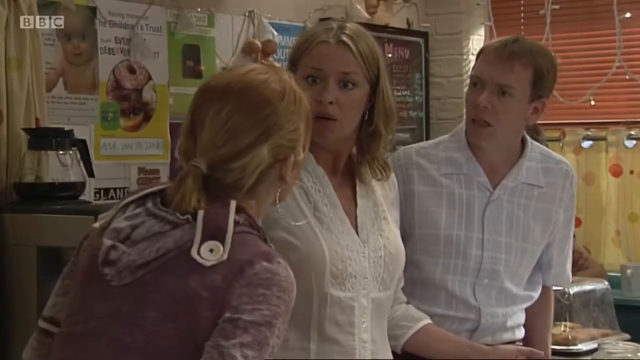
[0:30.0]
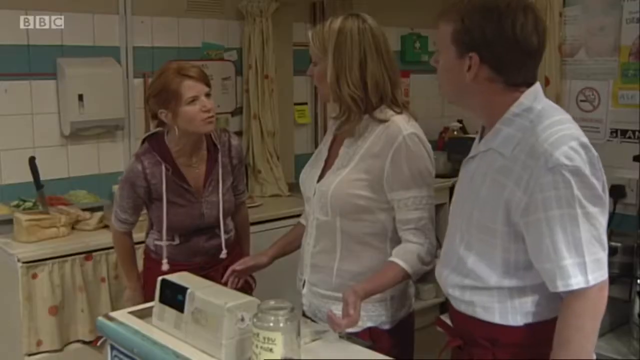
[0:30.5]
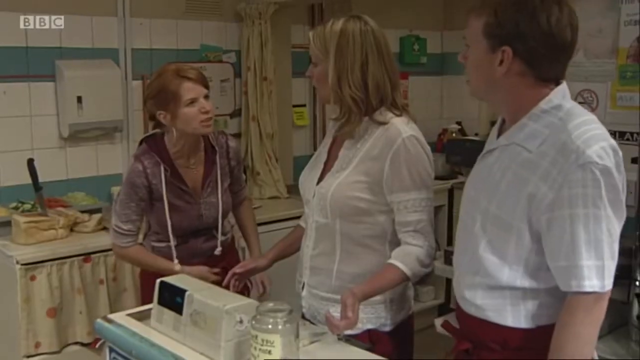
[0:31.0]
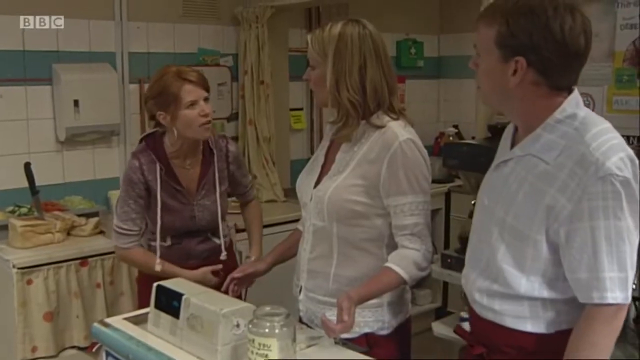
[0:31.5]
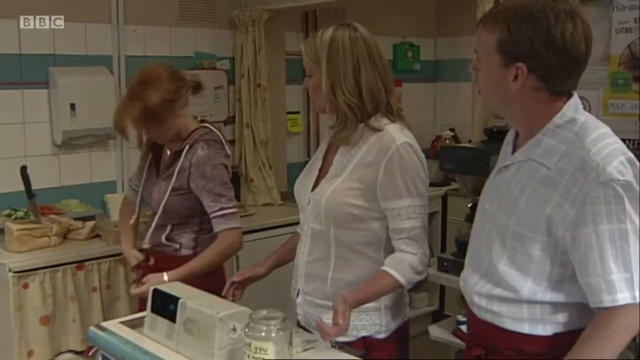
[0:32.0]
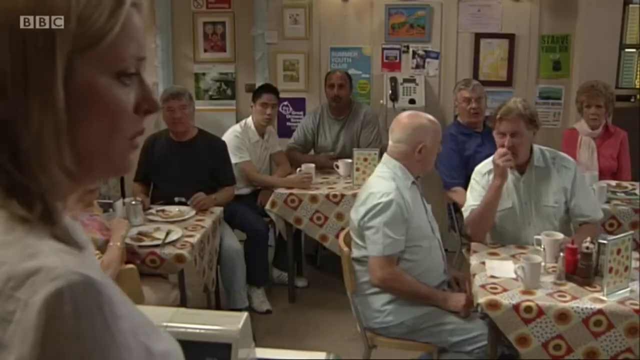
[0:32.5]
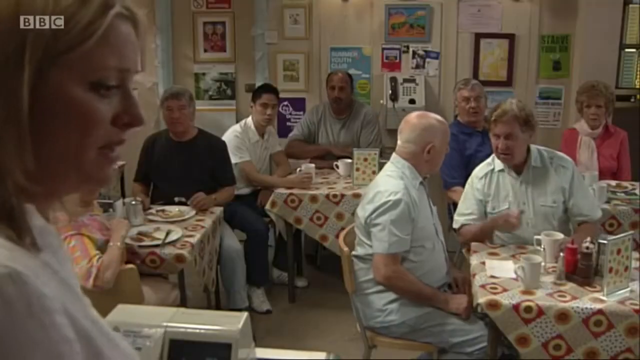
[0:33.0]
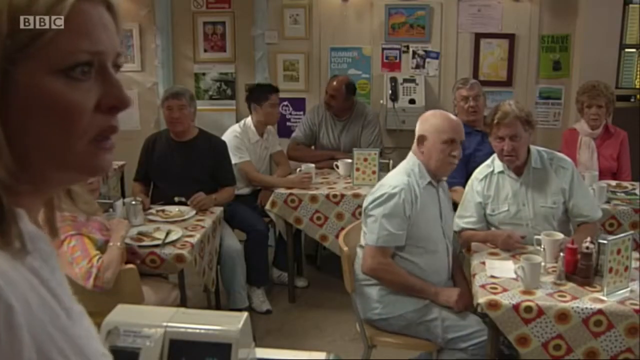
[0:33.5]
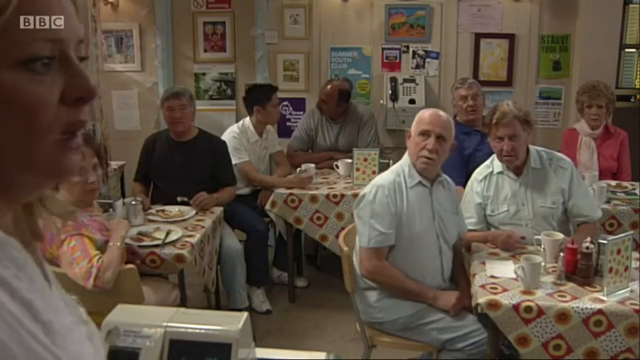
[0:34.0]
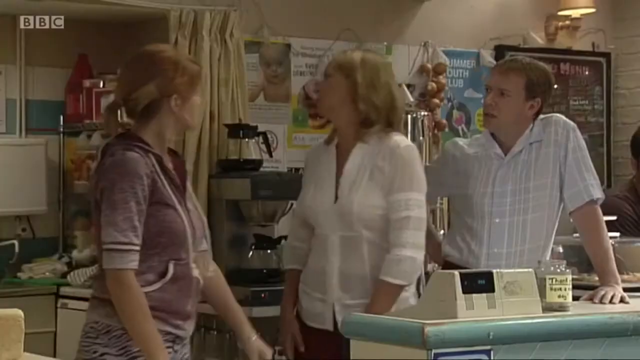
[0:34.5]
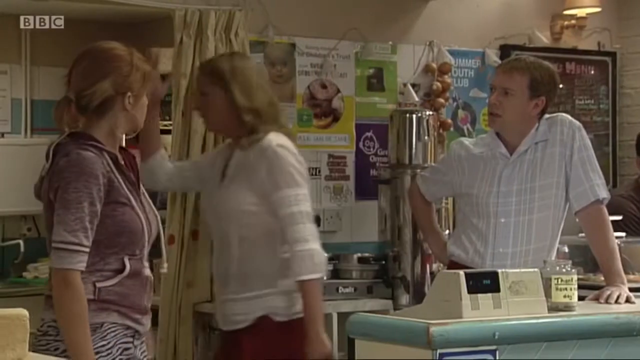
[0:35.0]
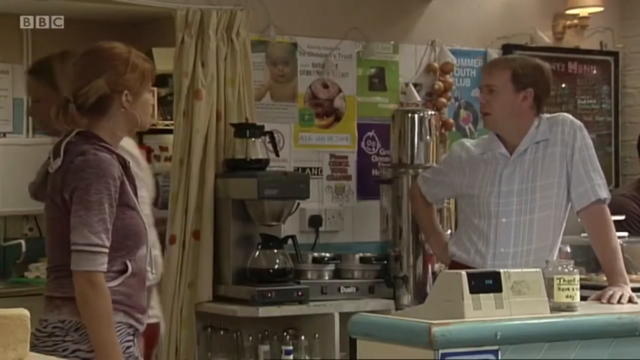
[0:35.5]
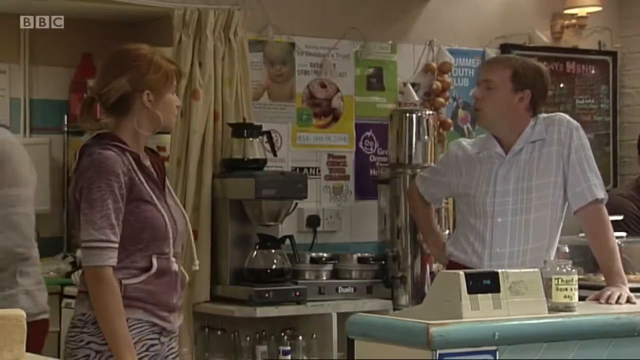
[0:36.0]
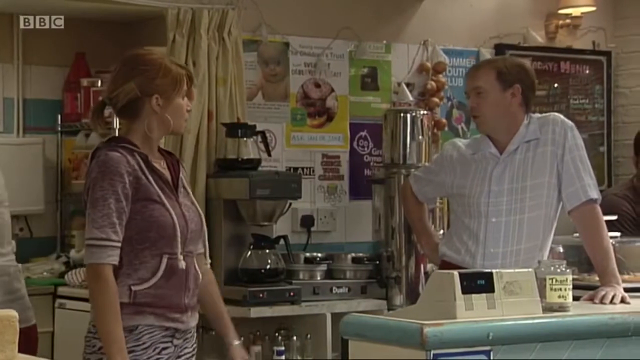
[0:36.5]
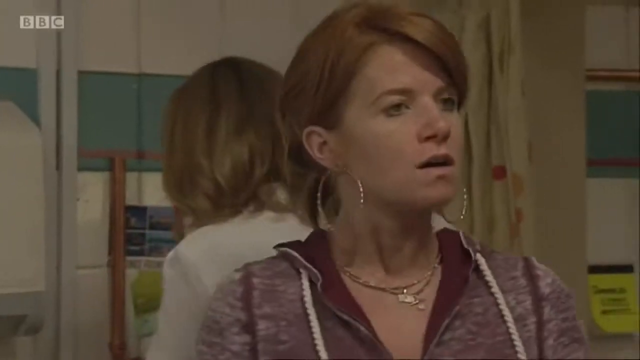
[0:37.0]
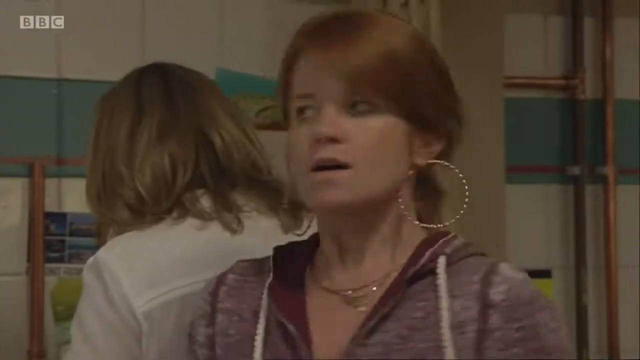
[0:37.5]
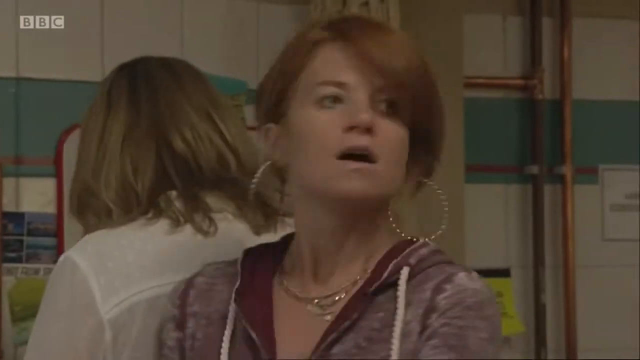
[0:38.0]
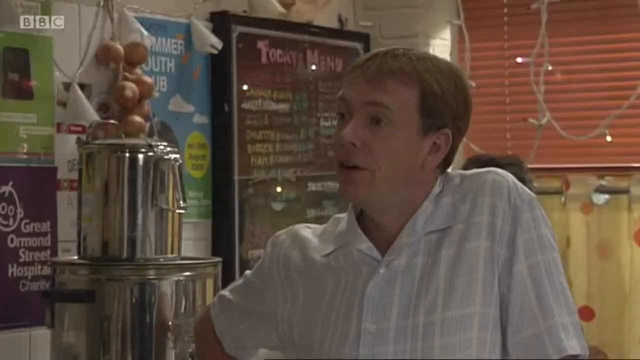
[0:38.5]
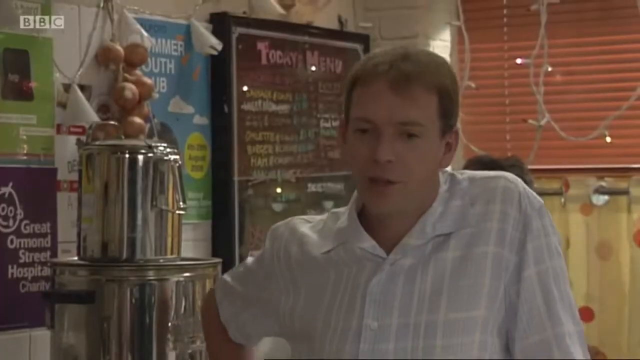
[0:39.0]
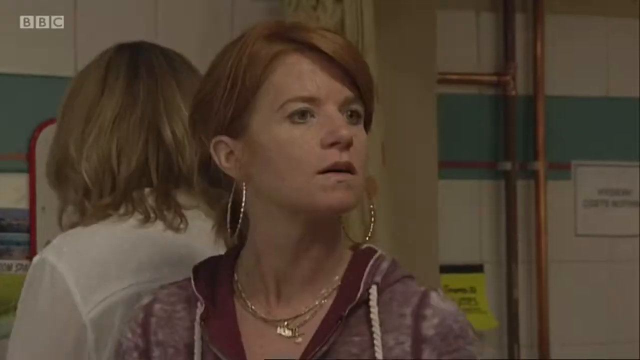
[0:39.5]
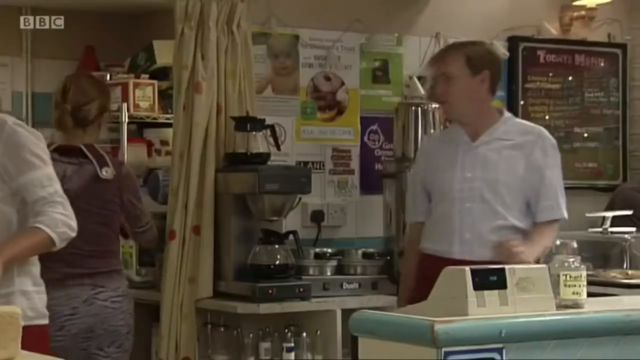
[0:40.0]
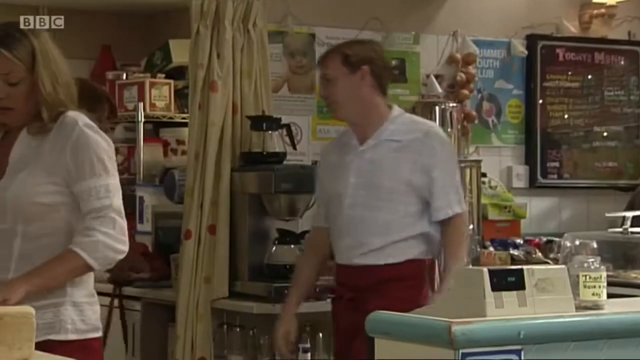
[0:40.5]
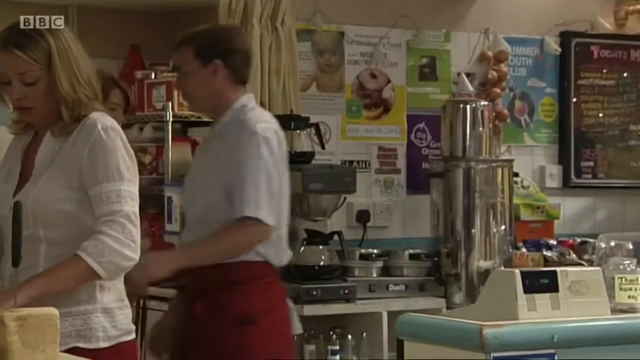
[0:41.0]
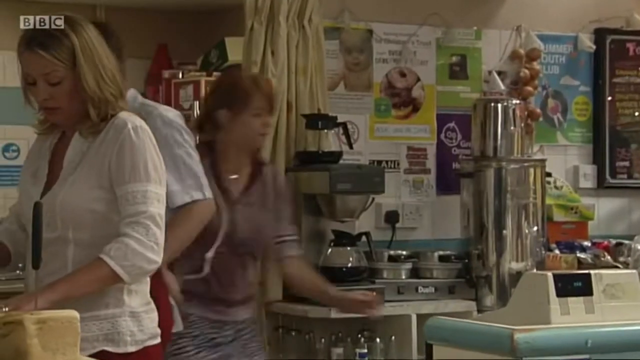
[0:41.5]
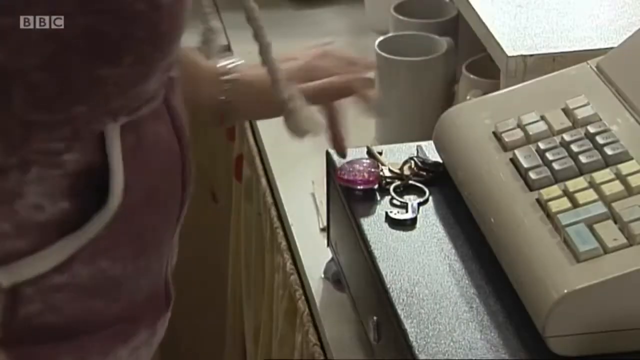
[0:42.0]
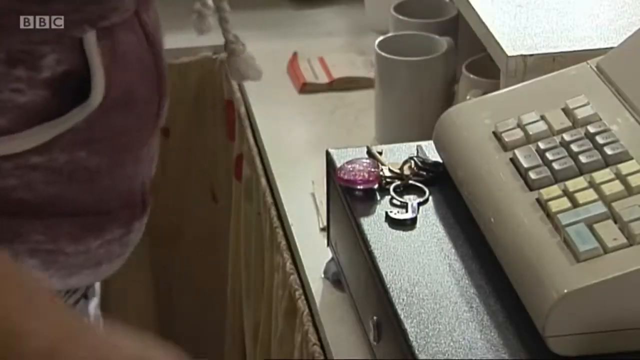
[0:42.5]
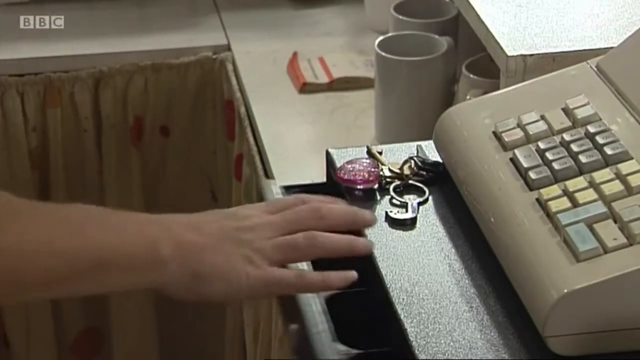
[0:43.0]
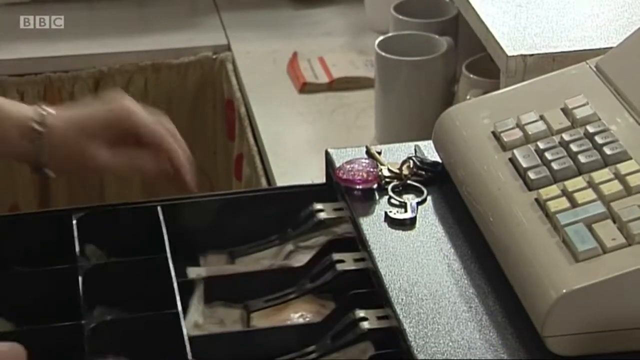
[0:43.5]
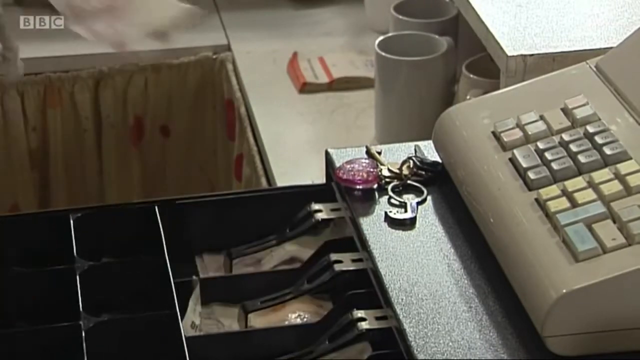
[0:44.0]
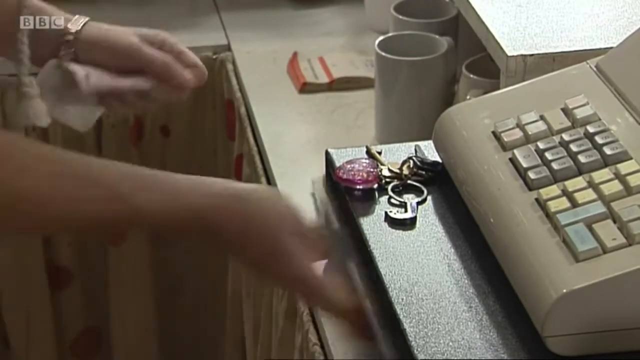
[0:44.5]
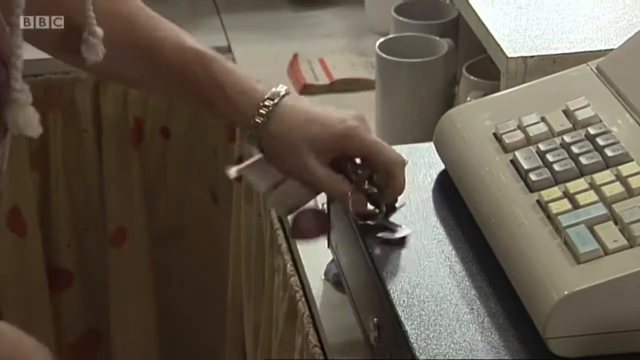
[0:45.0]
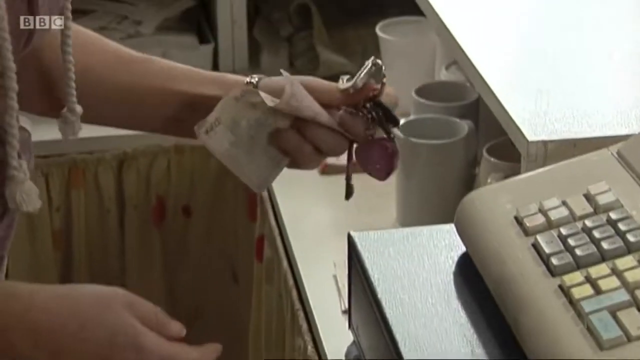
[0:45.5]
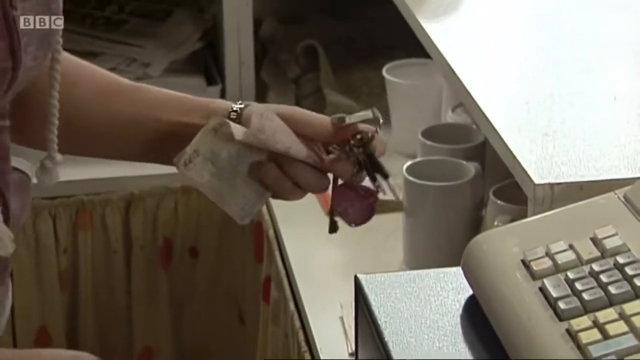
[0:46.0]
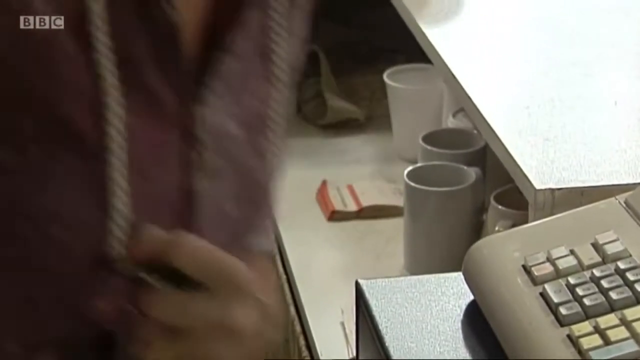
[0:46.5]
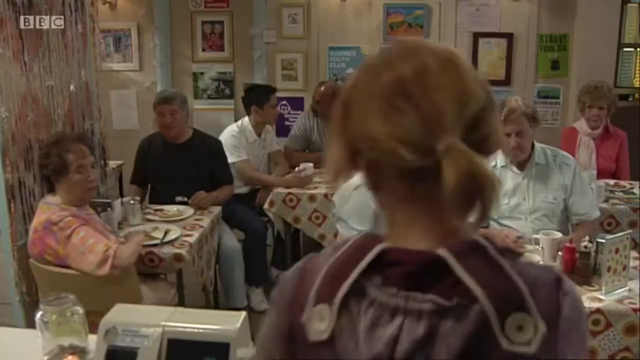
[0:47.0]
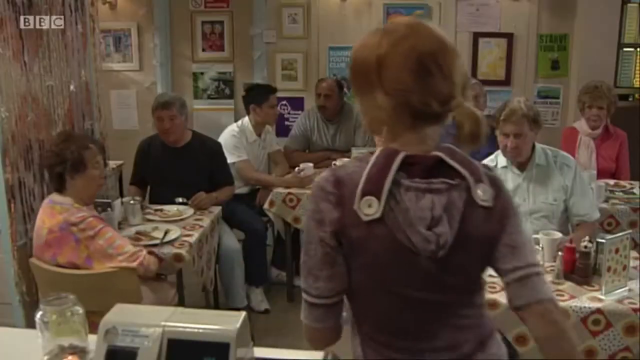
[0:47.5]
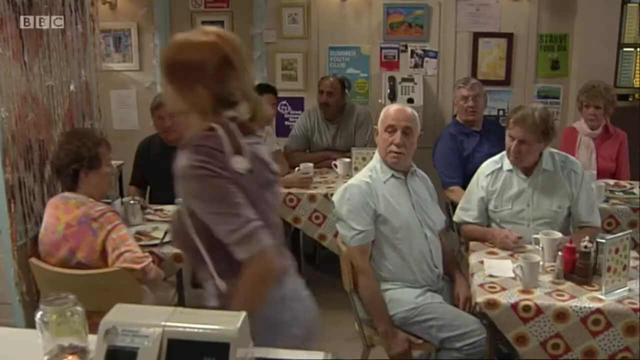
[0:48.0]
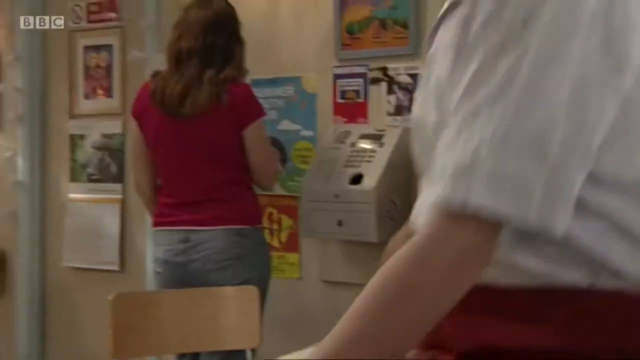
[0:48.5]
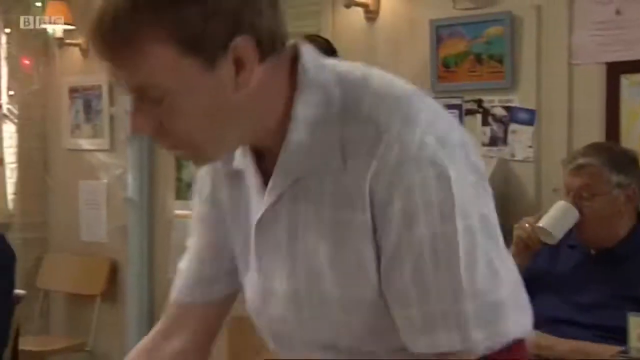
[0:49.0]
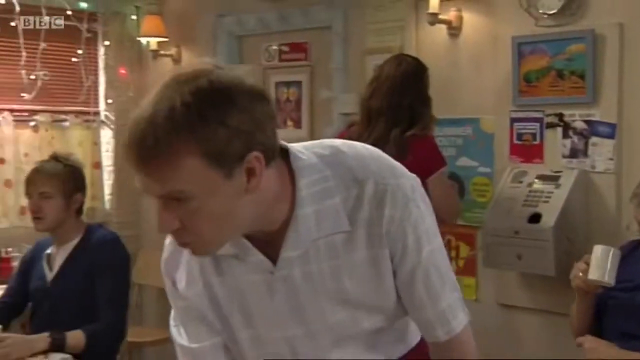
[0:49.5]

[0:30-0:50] In the kitchen, with the BBC logo visible in the top left, three main characters are present along with another person in the background. The woman in the grey sweater and red apron stops slicing the bread and argues with the woman and the man, while the other woman acts like a mediator. The knife is still stuck in the bread. The woman removes her apron, as if she wants to quit. The woman in the white top in the middle leaves the scene, leaving the man and the woman in the apron. The woman then hits the cashier, takes some money, takes the keys and leaves the store. The audience or customers are shocked, and the man tries to serve the customers.